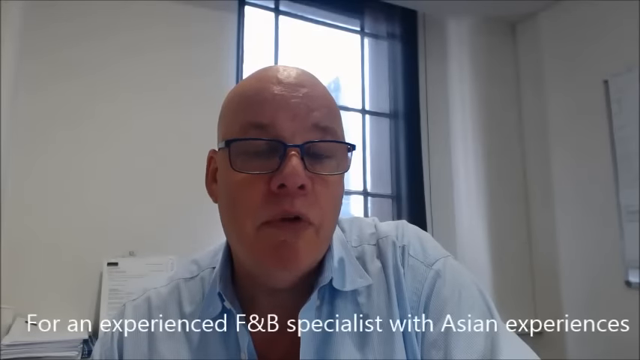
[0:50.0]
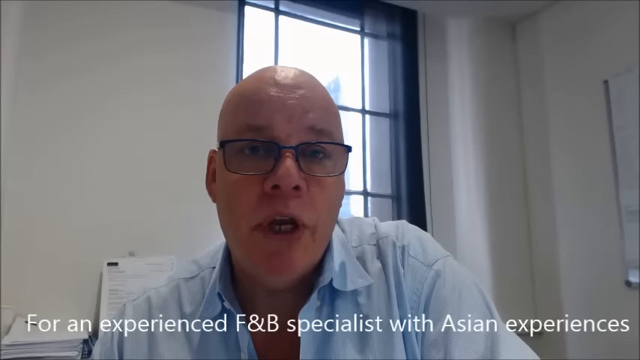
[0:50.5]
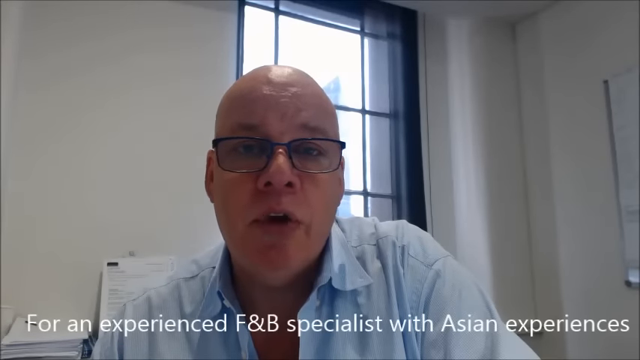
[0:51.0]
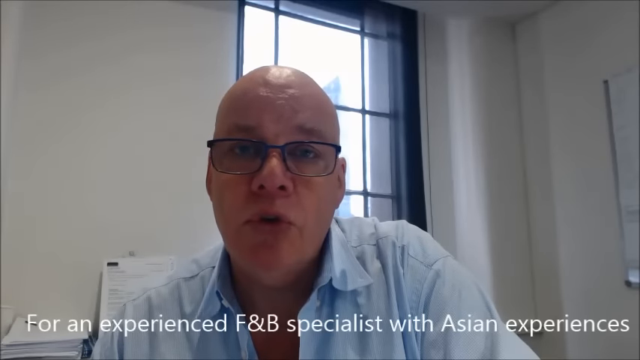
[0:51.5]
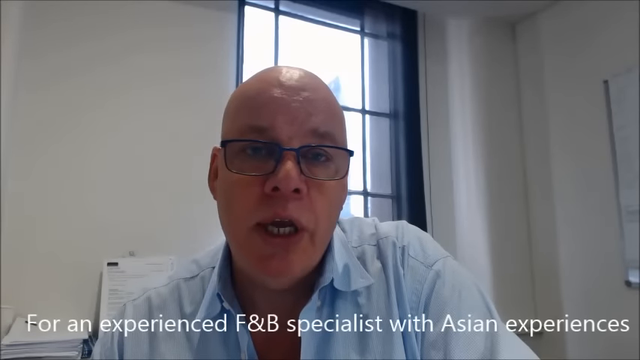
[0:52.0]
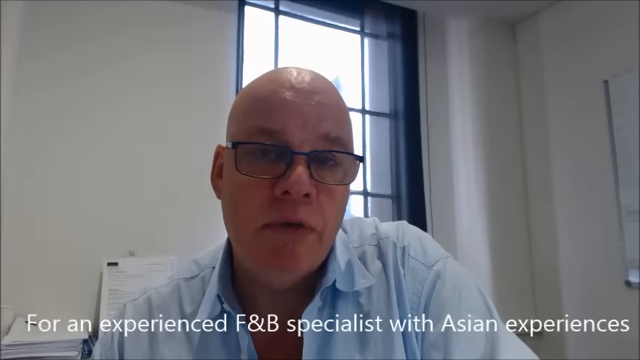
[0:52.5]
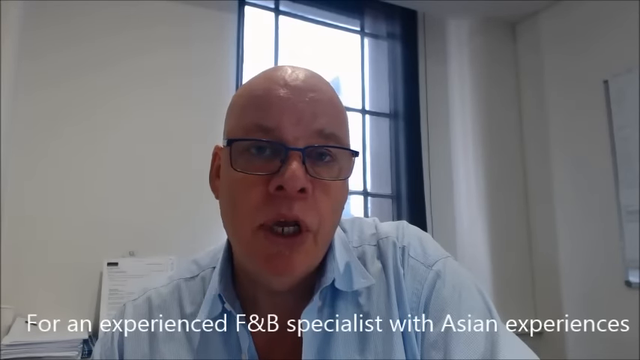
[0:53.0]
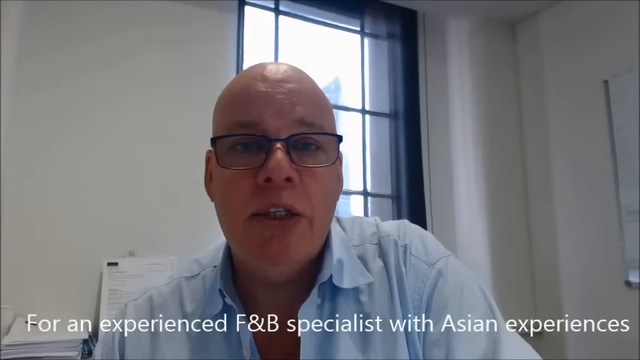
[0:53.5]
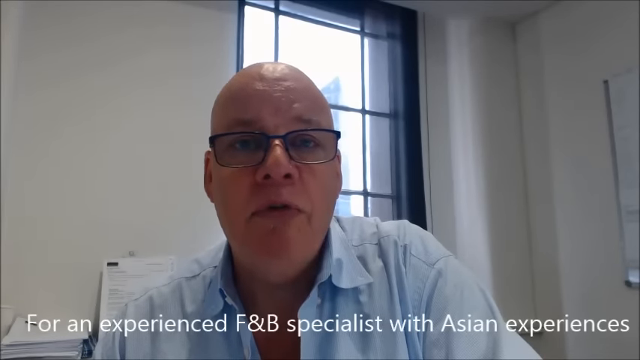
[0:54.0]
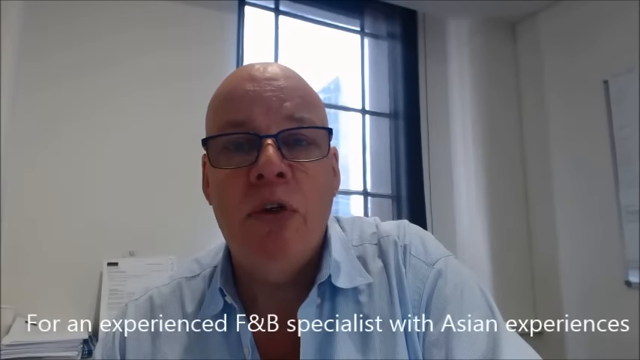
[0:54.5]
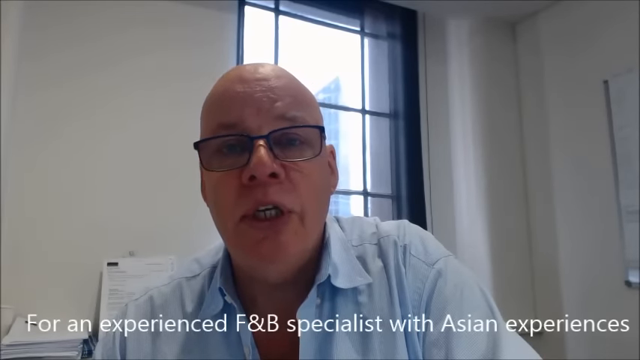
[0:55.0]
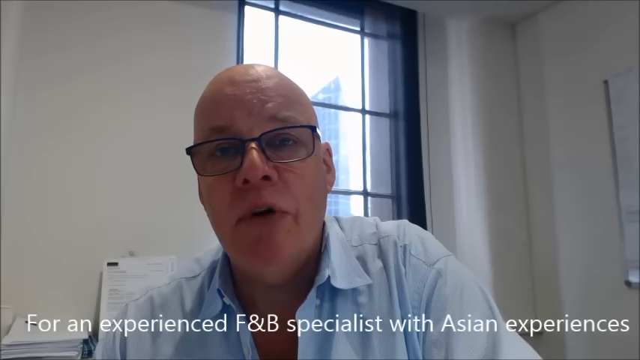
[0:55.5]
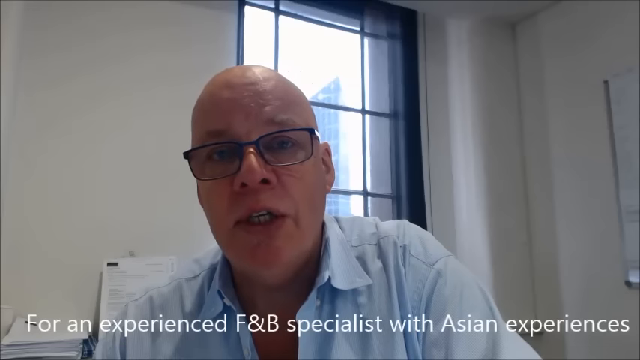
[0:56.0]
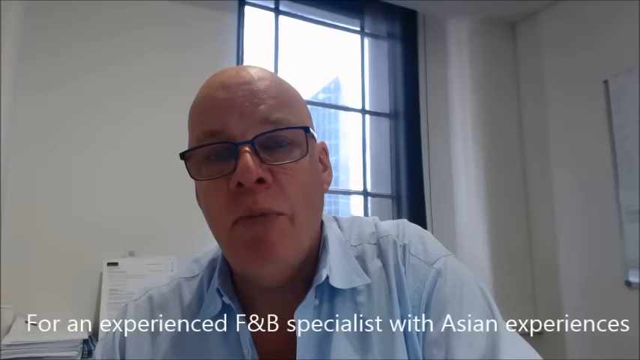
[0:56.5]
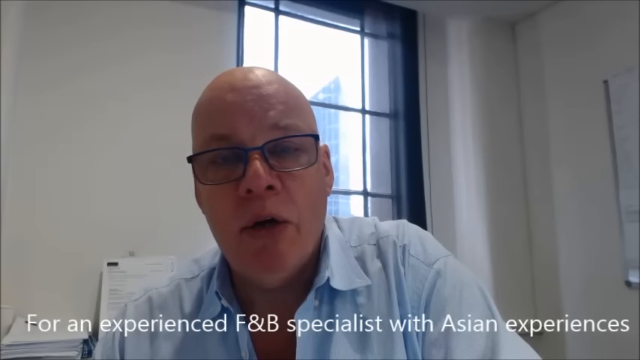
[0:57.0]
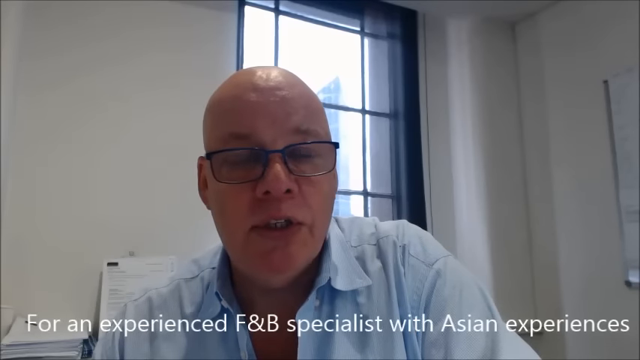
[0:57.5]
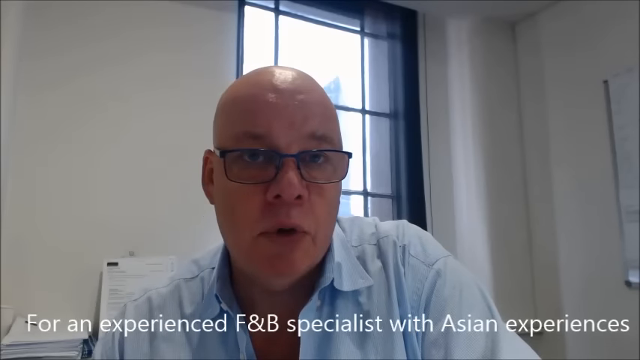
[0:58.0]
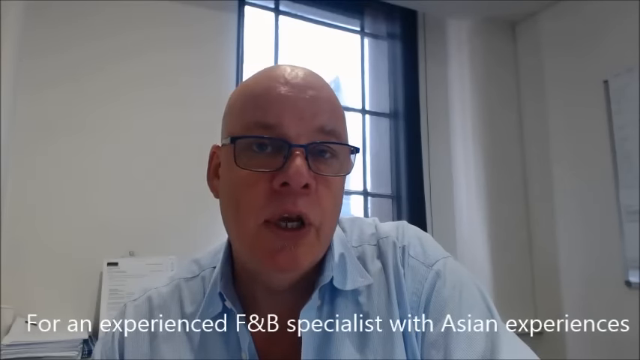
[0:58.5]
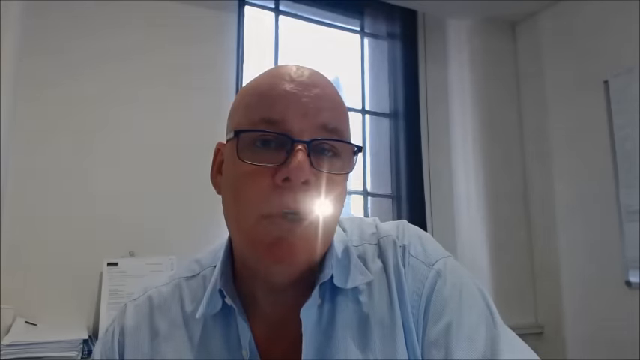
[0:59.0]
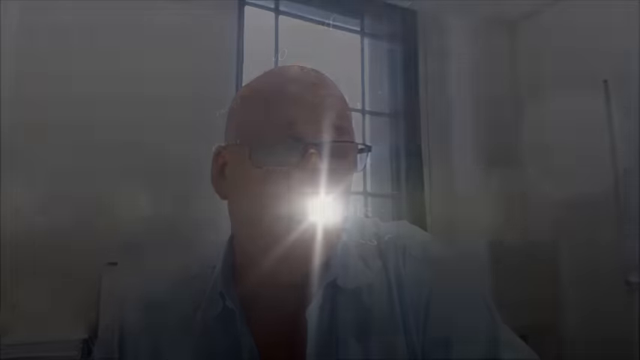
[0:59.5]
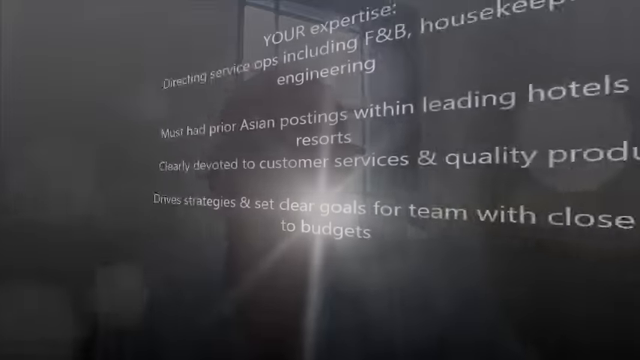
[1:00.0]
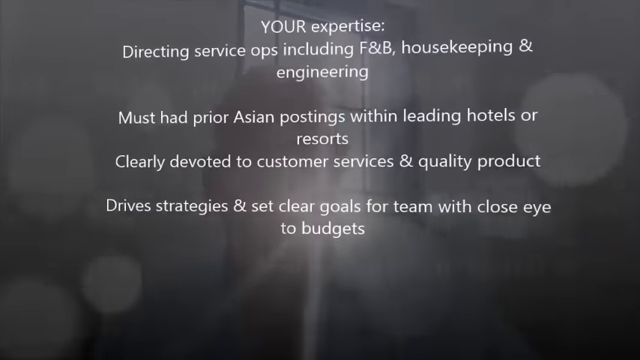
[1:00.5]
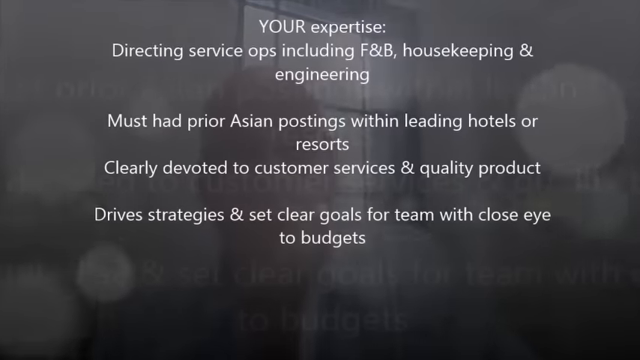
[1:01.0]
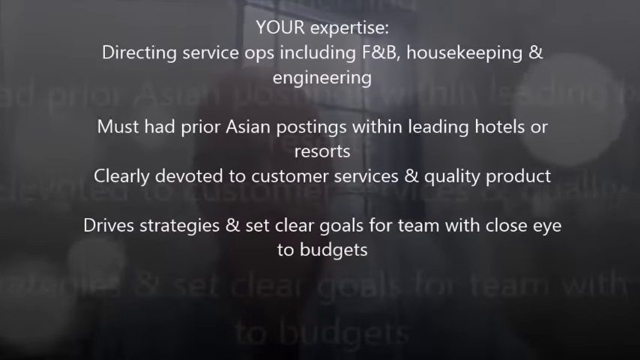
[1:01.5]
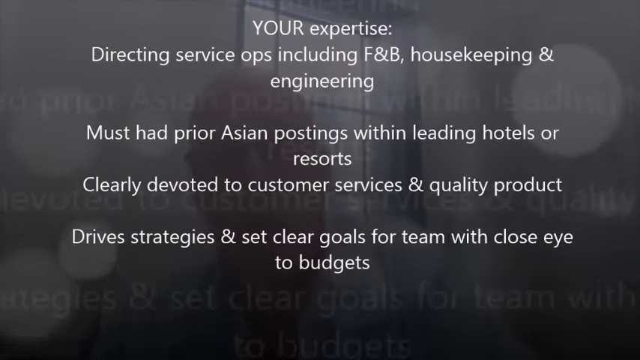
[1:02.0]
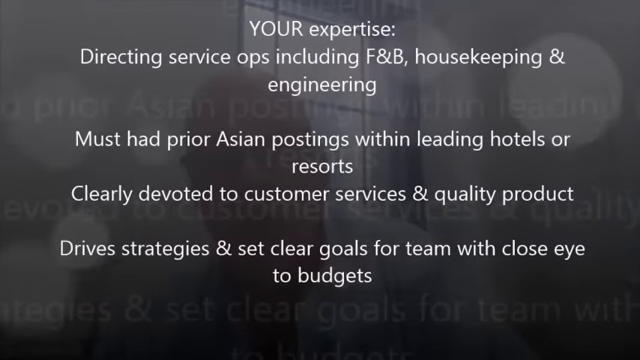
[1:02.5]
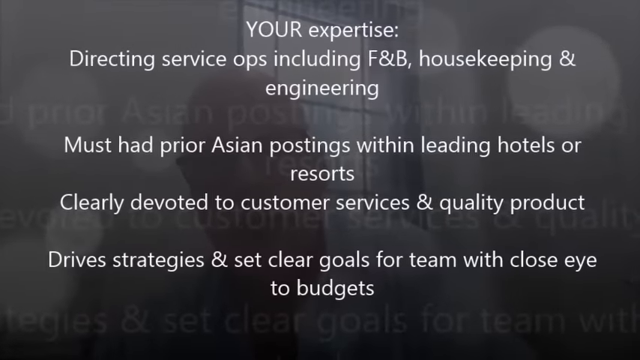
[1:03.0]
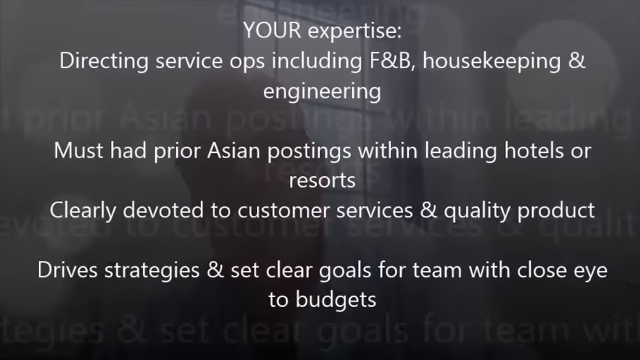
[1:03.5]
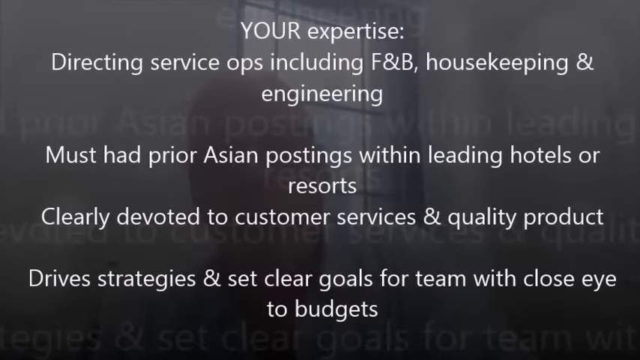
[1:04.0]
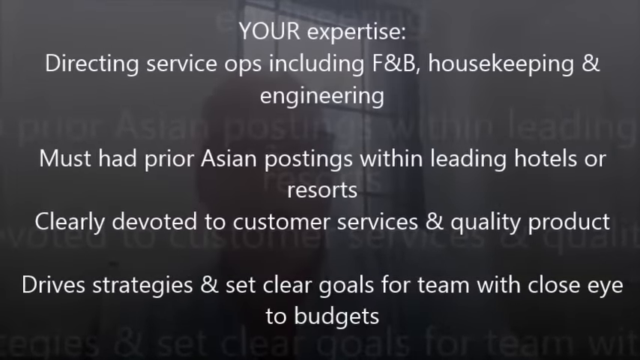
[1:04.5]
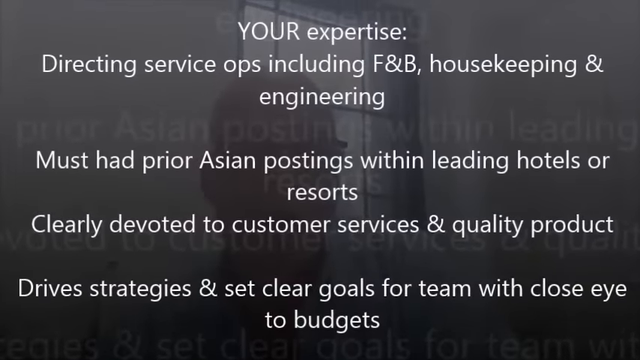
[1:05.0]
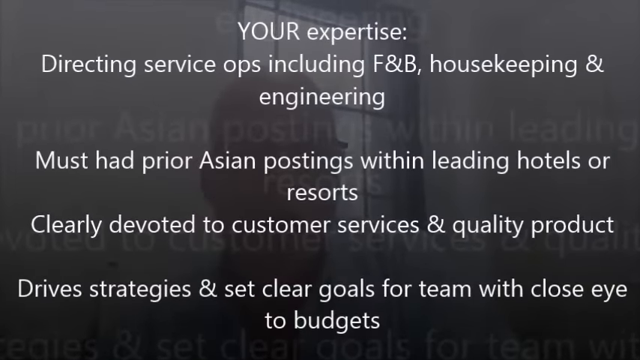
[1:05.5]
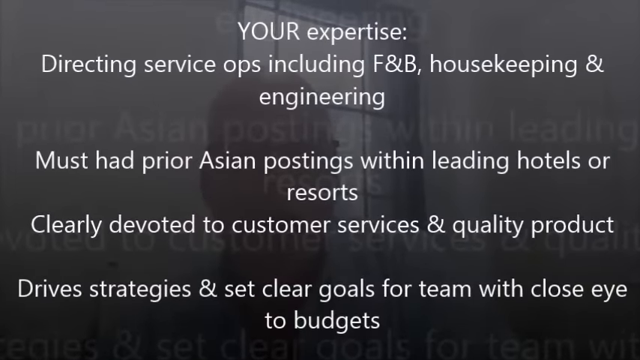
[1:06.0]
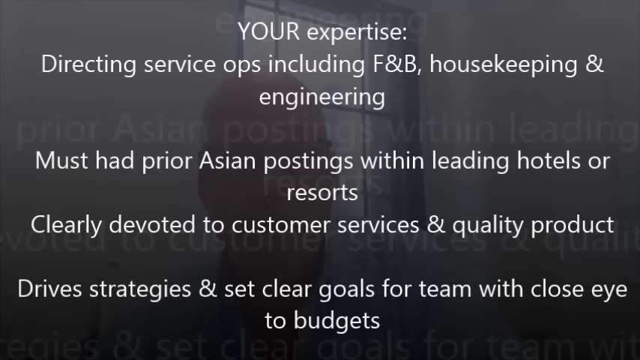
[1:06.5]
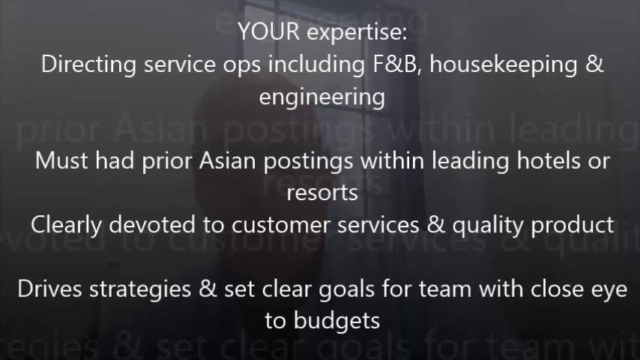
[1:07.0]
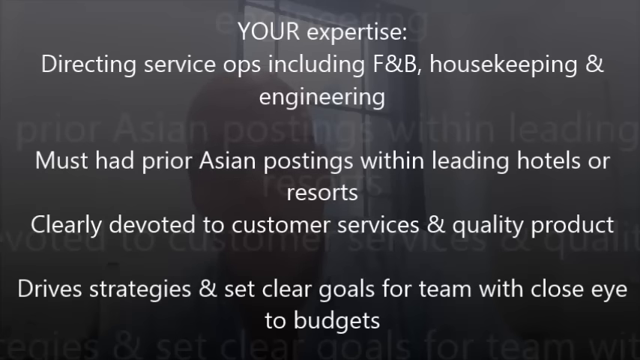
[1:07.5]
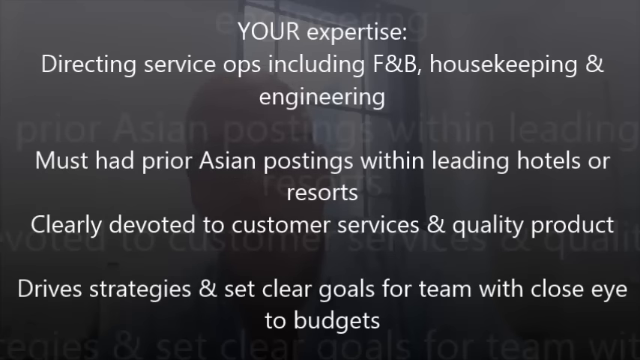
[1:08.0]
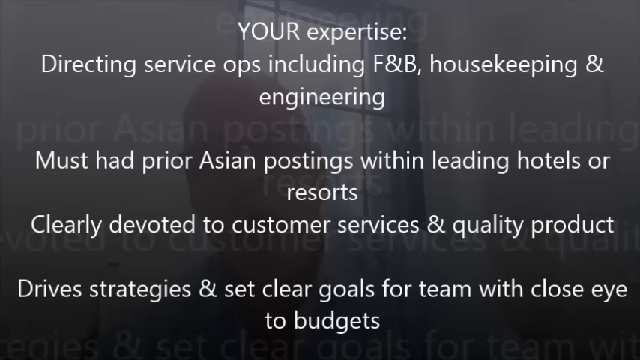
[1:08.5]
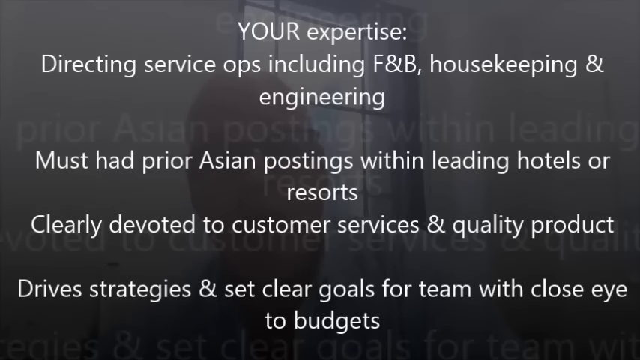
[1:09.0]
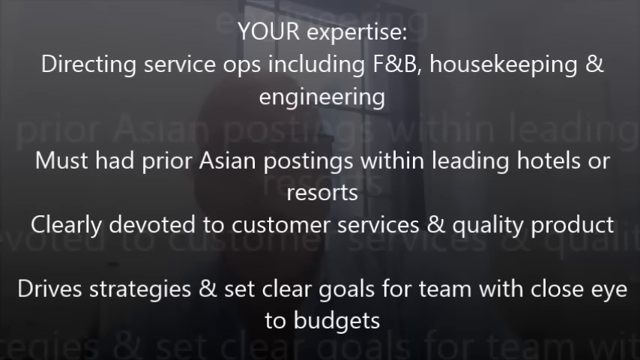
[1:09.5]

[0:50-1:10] Text reads "for an experienced F&B specialist with Asian experiences." Then text under "your expertise" reads "directing service ops, including F&B housekeeping and engineering," "must had prior Asian postings within leading hotels or resorts," "clearly devoted to customer services and quality product," and "drive strategies and set clear goals for team with close eye to budgets." The man is visible talking in the background, behind the words.